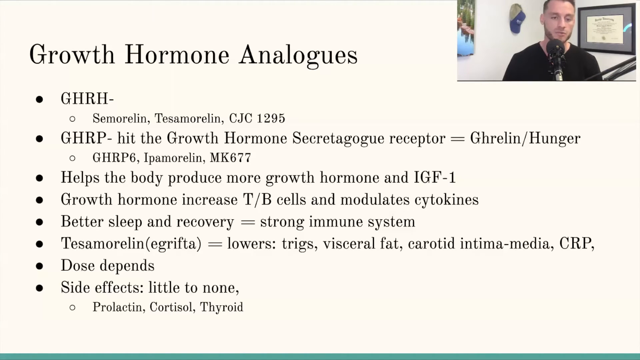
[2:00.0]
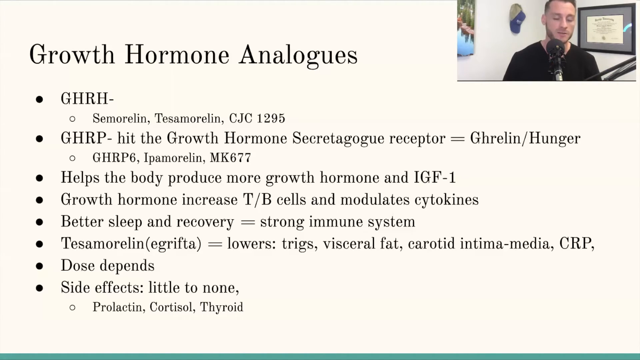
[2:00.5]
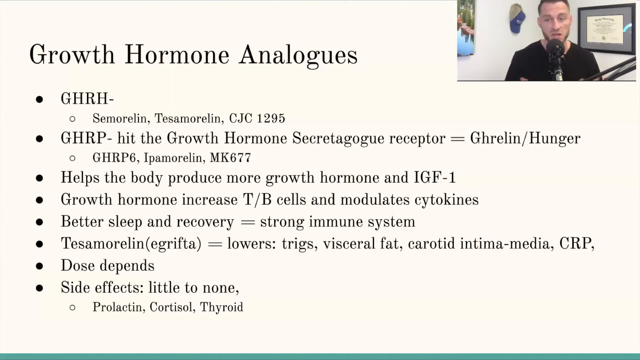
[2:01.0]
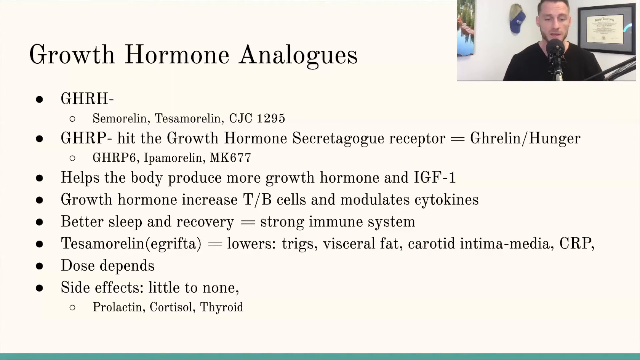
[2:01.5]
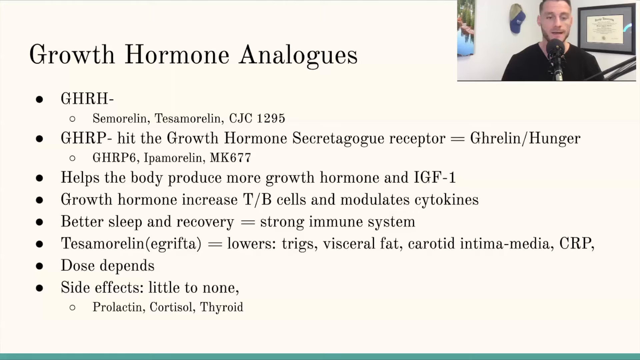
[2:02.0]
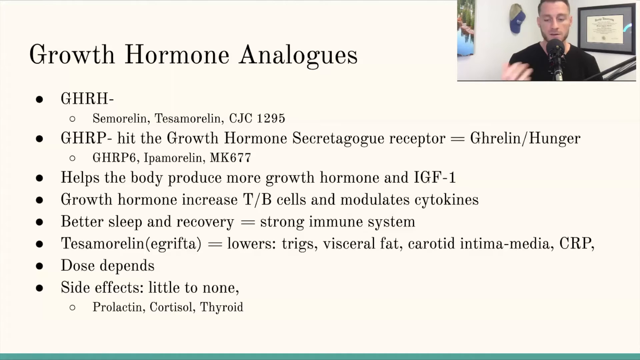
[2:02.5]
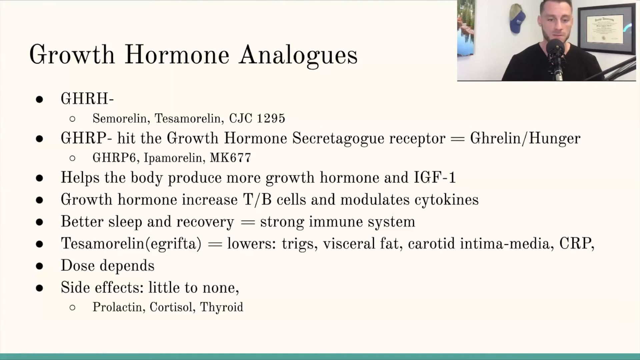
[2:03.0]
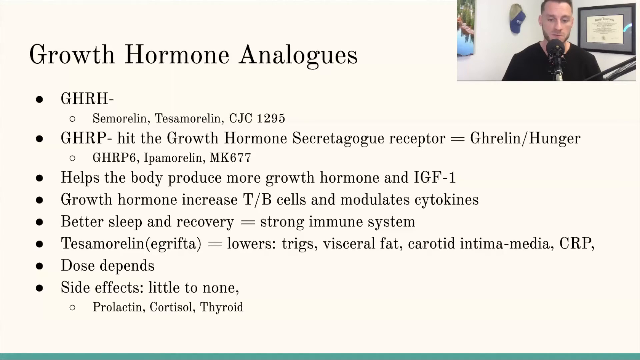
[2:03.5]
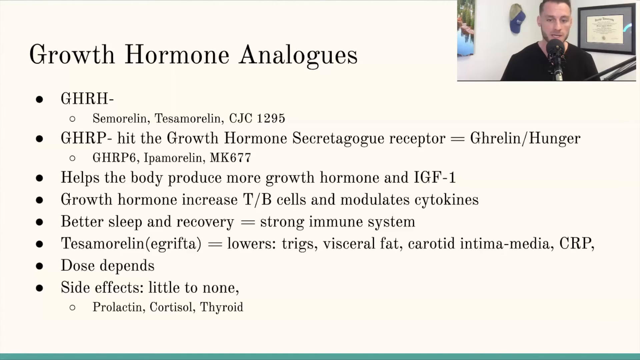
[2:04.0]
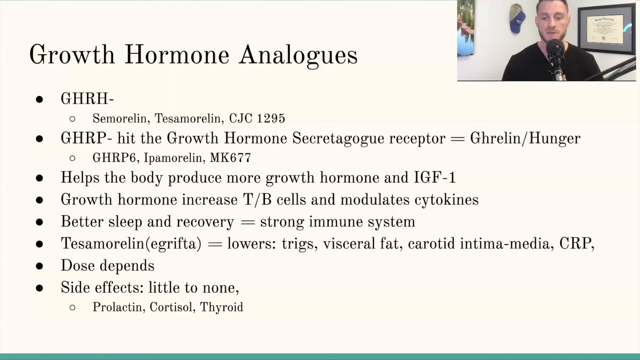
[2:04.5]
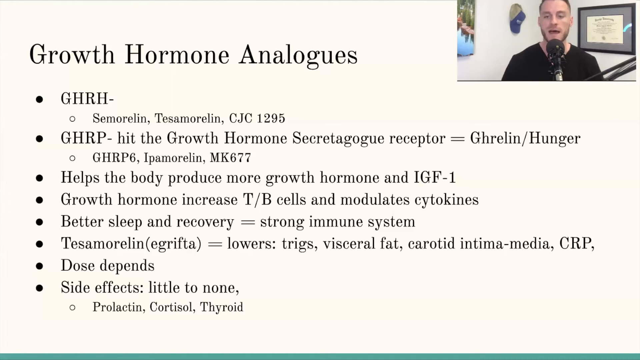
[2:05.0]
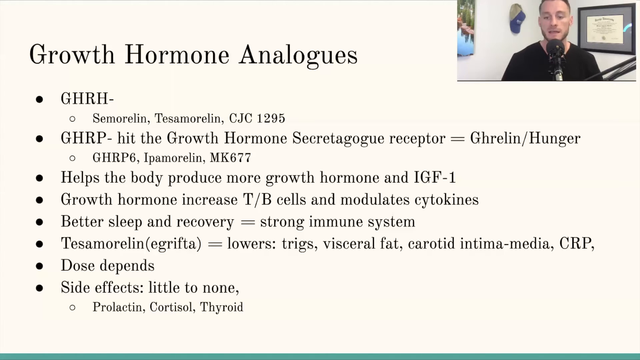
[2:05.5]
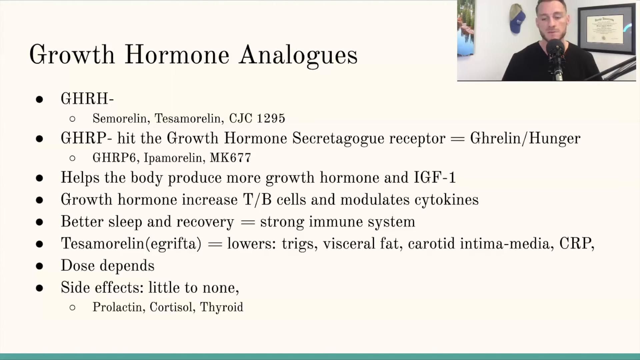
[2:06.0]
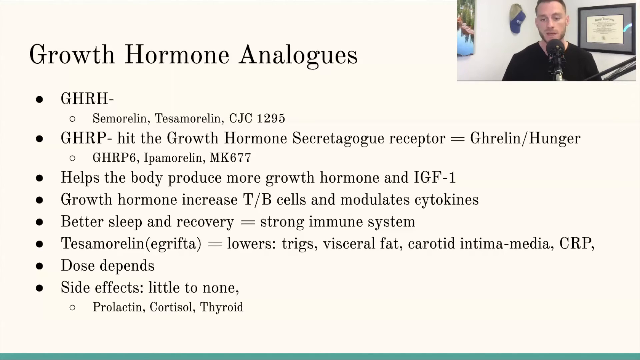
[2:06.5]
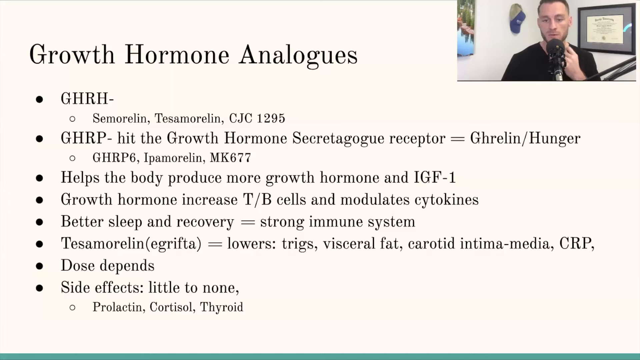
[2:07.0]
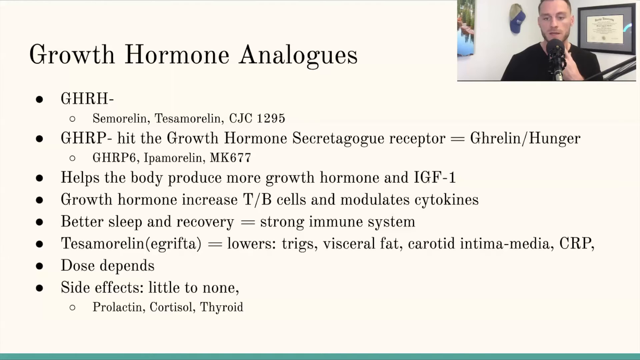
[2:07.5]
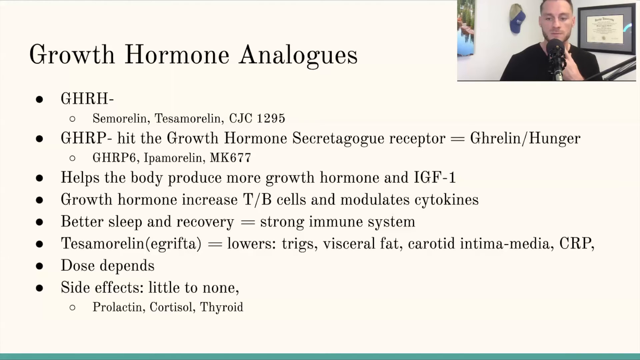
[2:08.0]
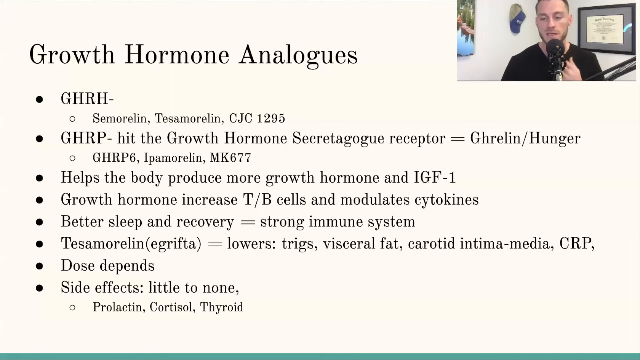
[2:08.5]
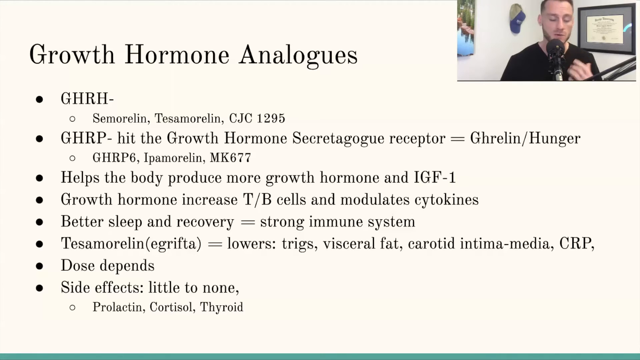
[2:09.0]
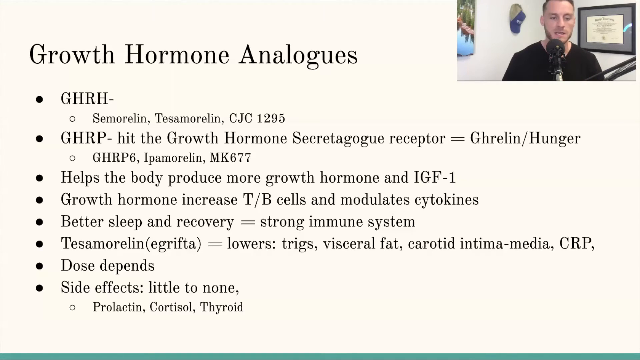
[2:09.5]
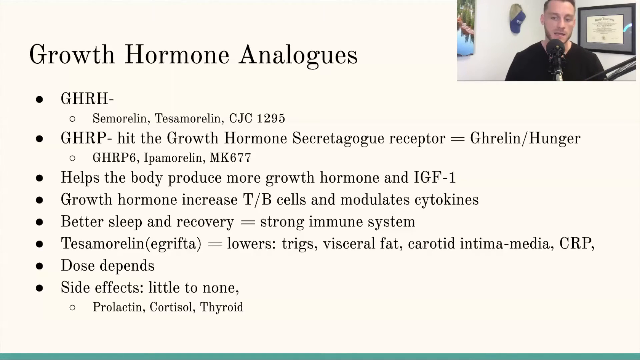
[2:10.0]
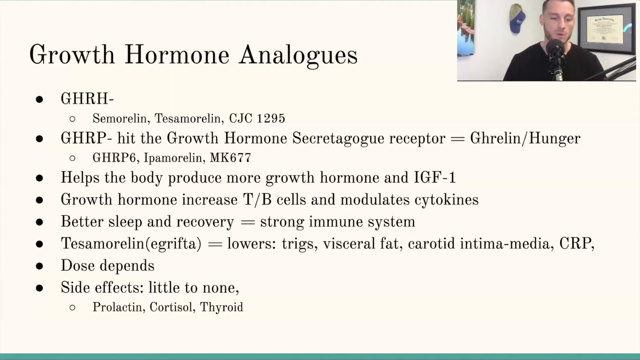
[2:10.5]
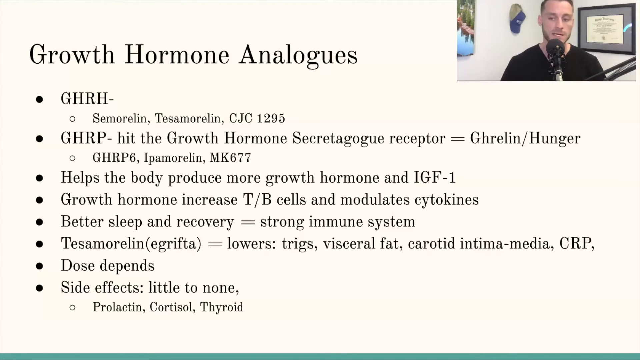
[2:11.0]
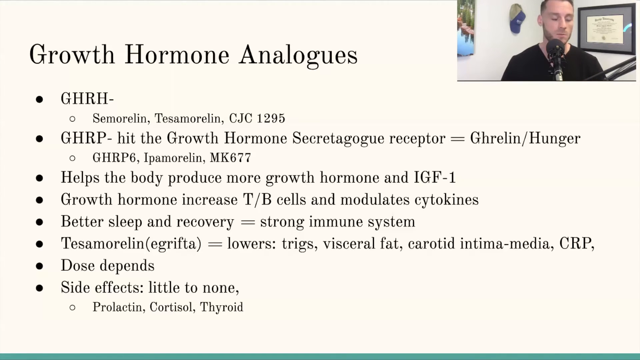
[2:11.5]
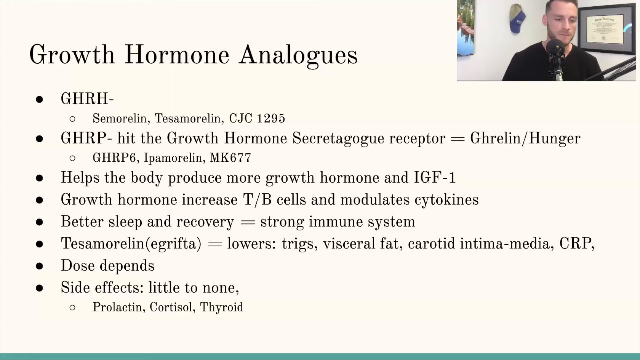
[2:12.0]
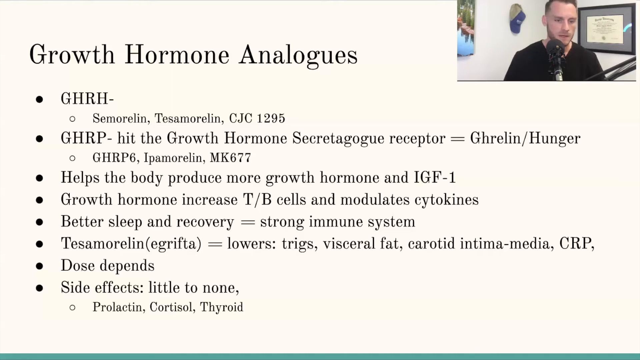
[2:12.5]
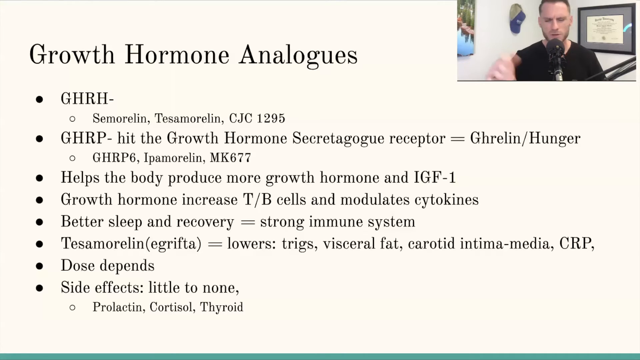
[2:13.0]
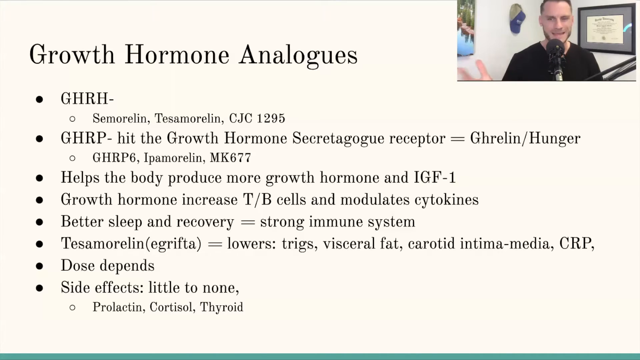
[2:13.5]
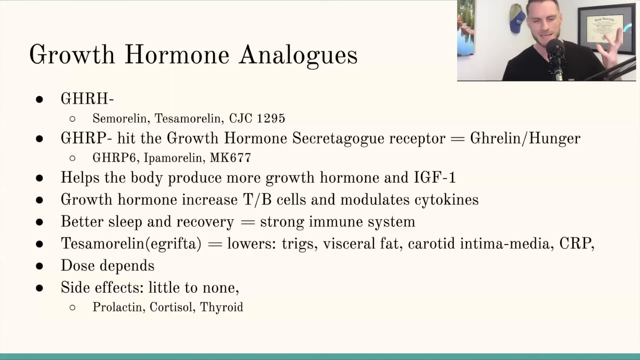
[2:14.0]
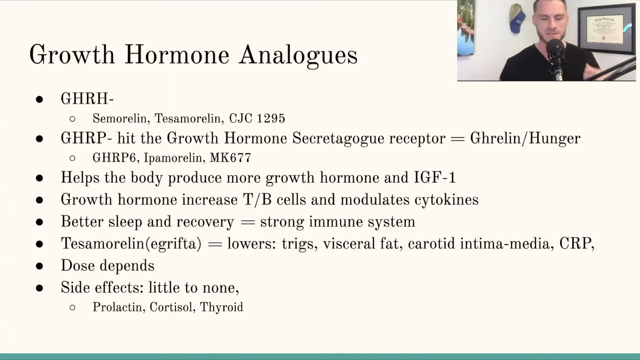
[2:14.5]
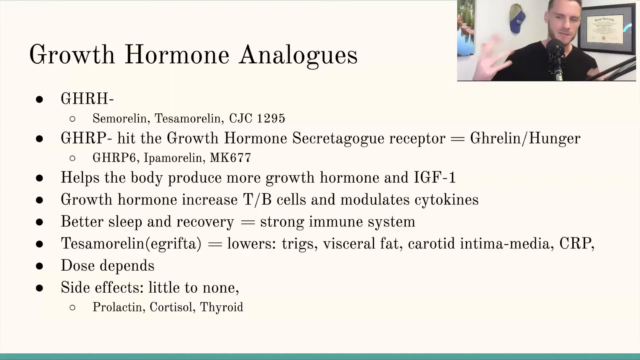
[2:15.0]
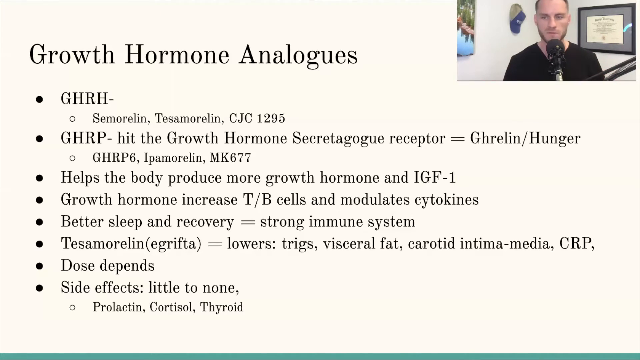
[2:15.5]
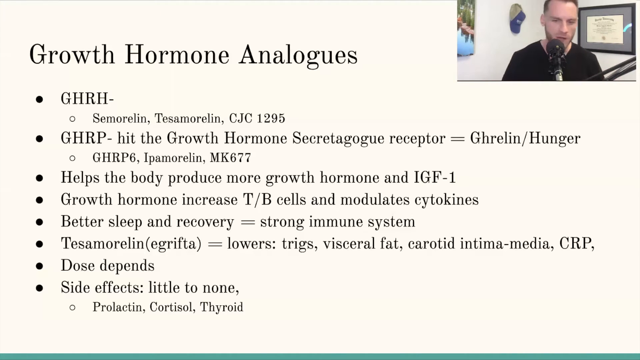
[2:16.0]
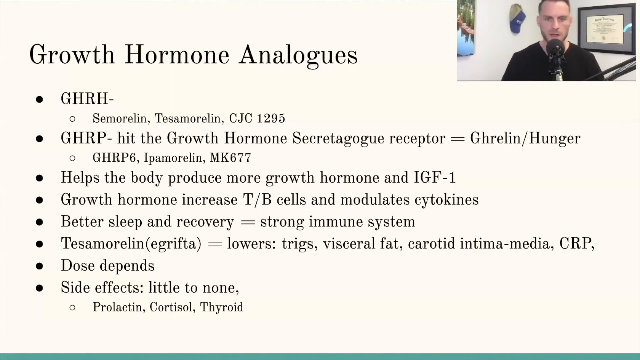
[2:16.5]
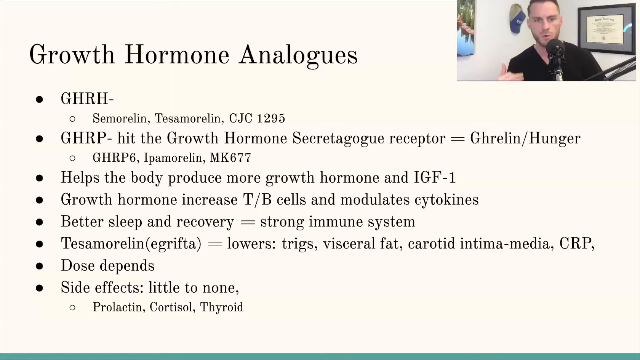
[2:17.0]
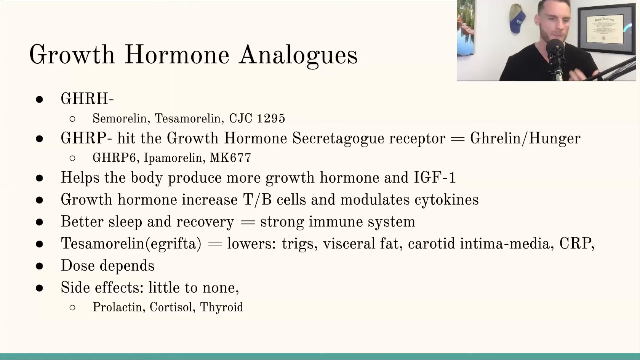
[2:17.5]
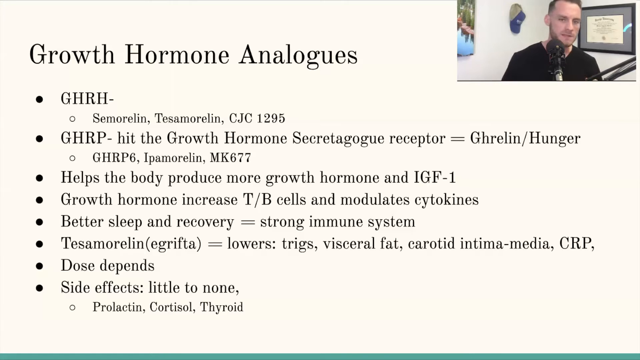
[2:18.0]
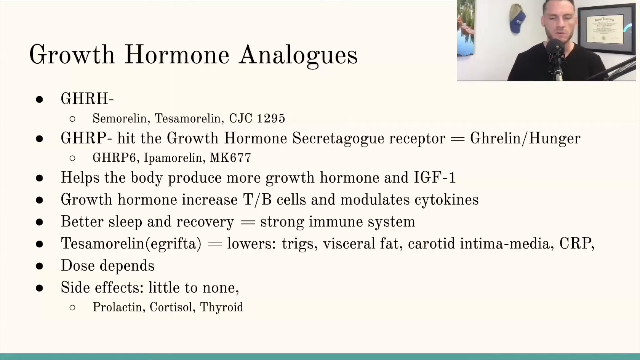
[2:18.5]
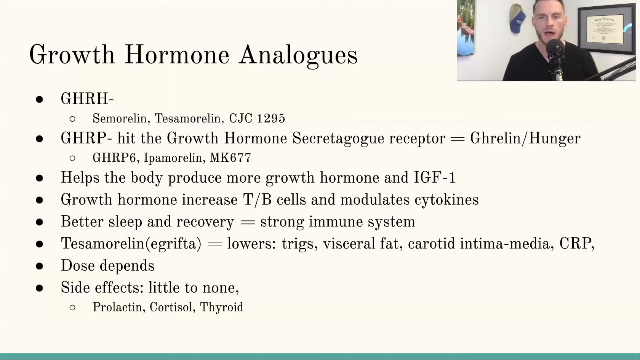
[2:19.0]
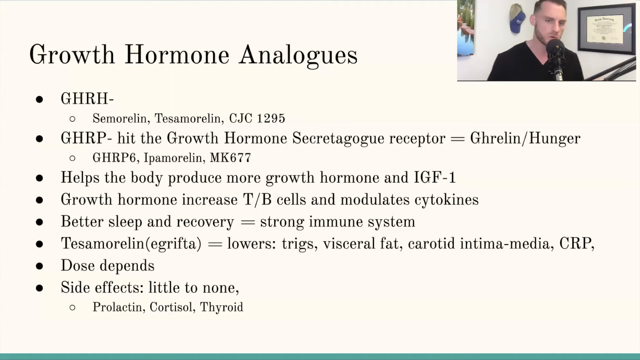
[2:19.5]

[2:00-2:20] The same slide remains on screen as the man continues talking, using hand gestures that look like he is counting or making distinct, numbered points. He does a kind of shrug. He appears to be talking at quite a pace.